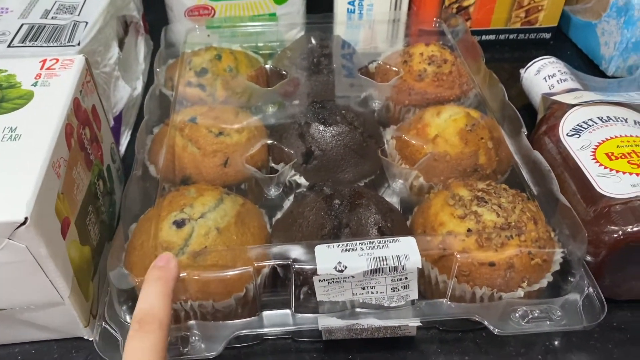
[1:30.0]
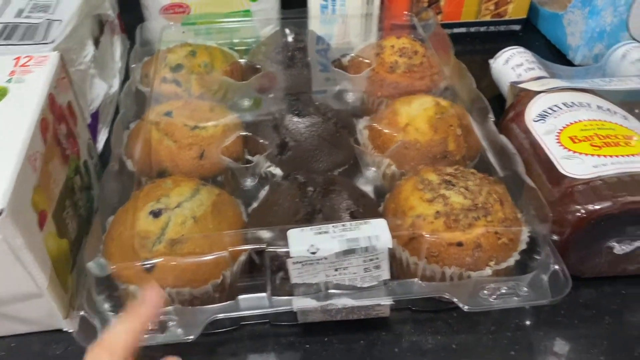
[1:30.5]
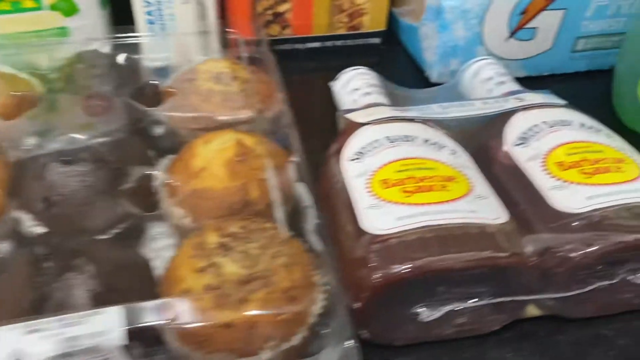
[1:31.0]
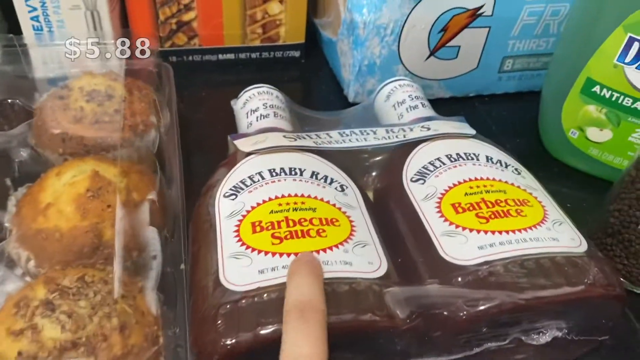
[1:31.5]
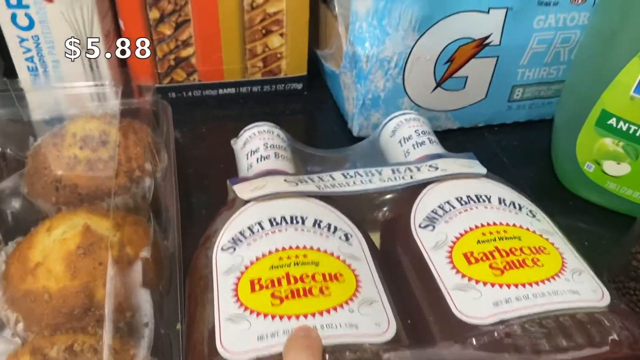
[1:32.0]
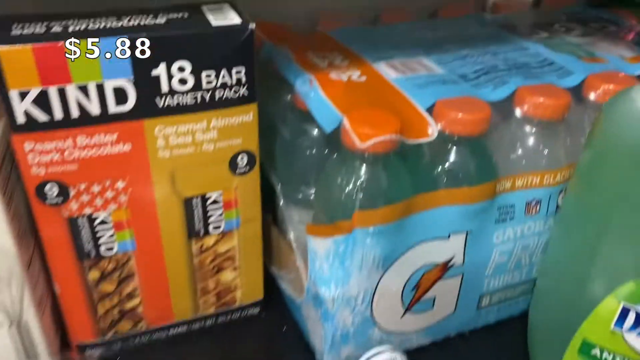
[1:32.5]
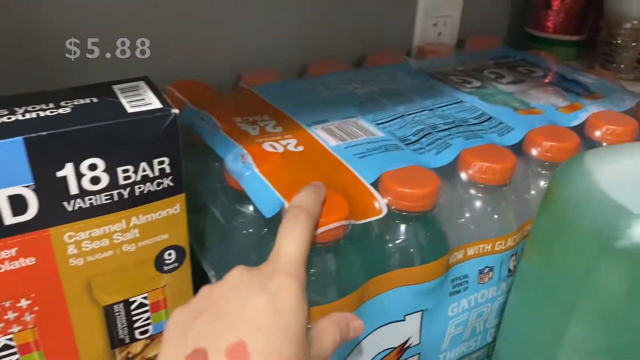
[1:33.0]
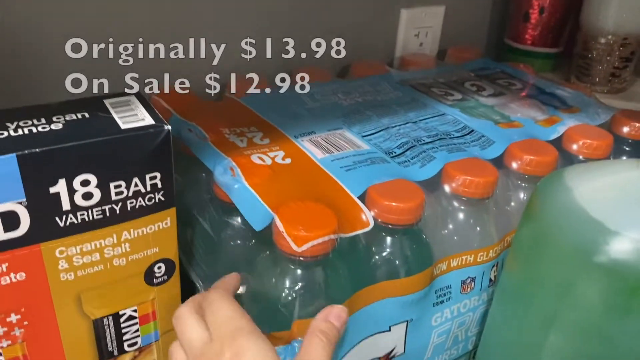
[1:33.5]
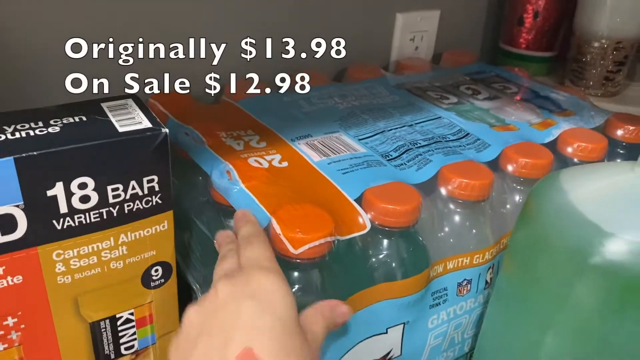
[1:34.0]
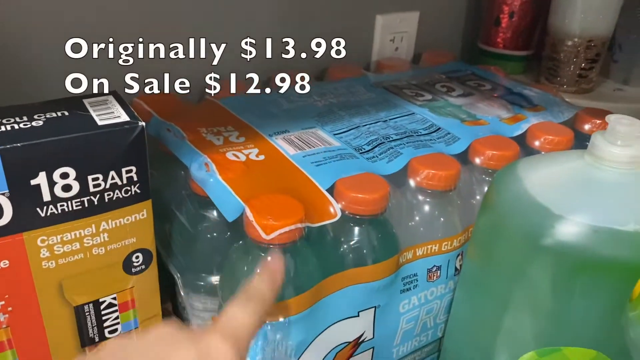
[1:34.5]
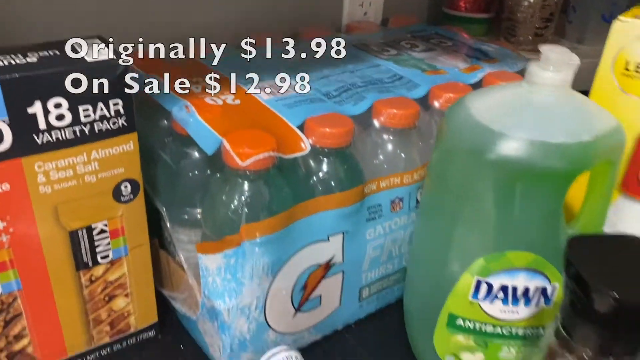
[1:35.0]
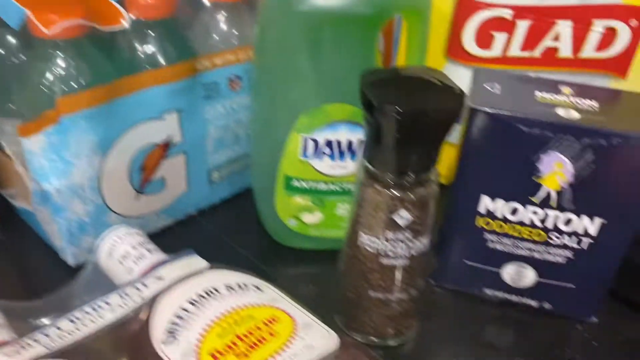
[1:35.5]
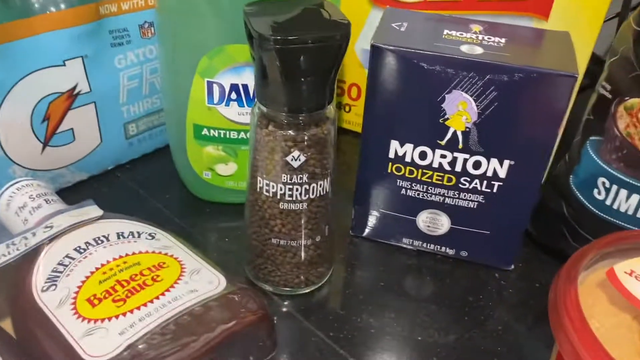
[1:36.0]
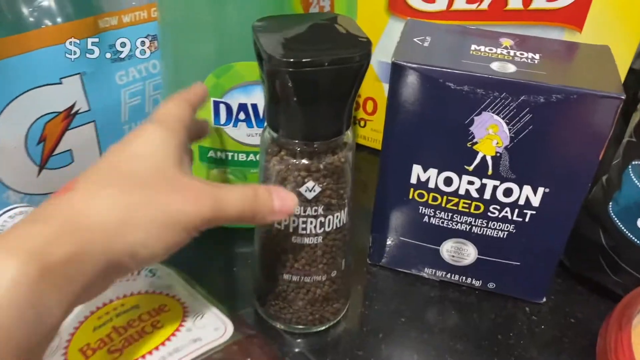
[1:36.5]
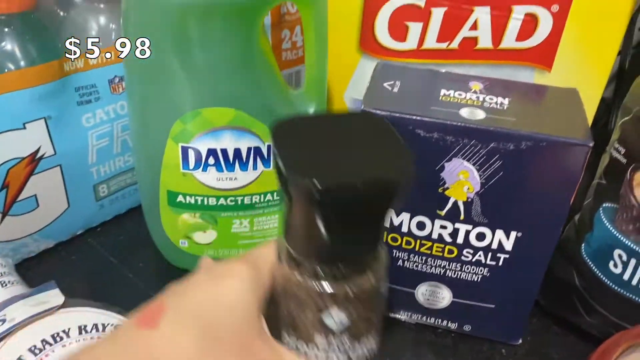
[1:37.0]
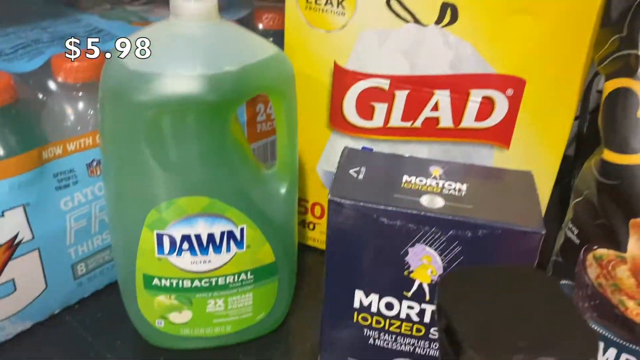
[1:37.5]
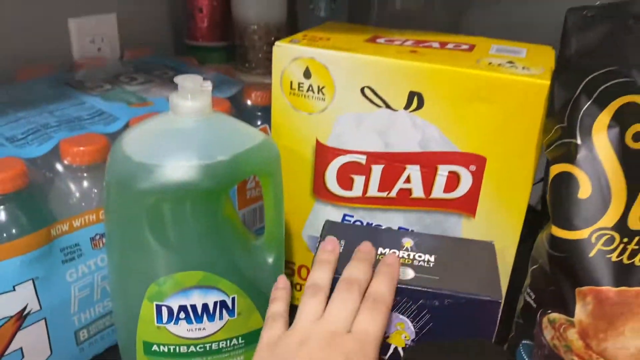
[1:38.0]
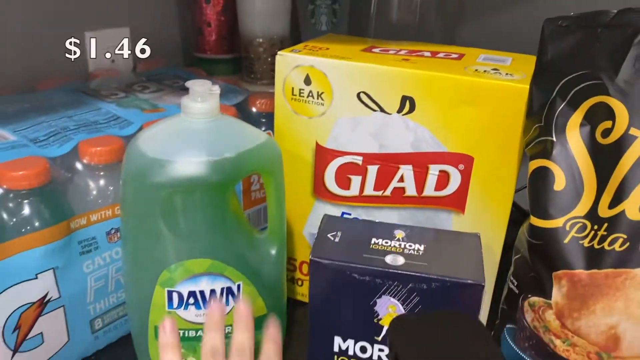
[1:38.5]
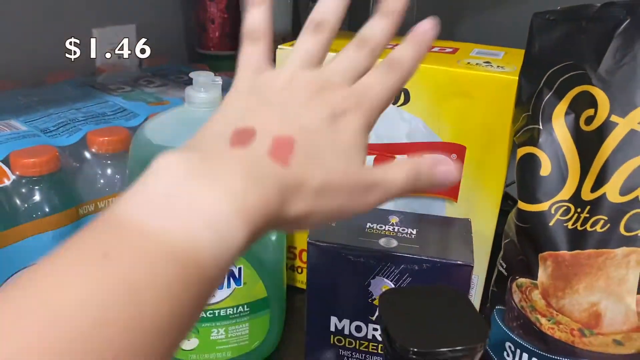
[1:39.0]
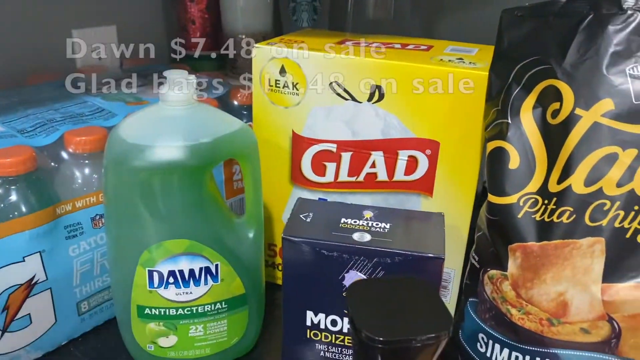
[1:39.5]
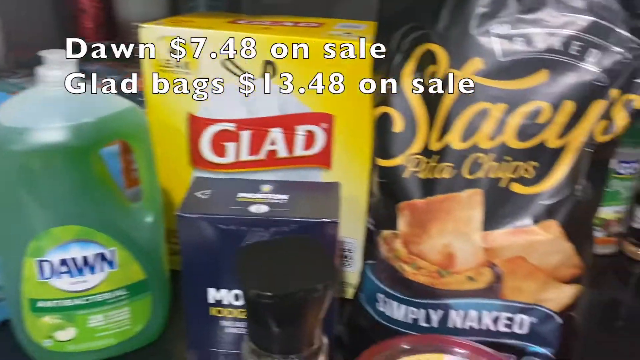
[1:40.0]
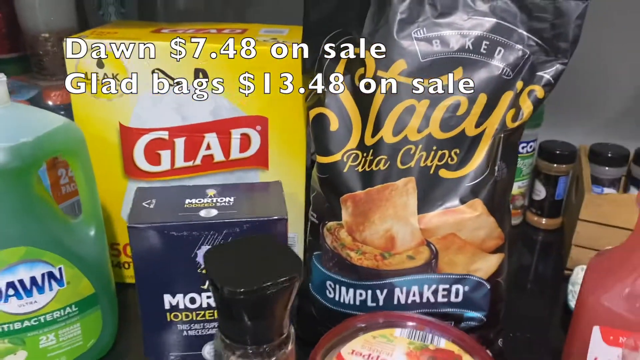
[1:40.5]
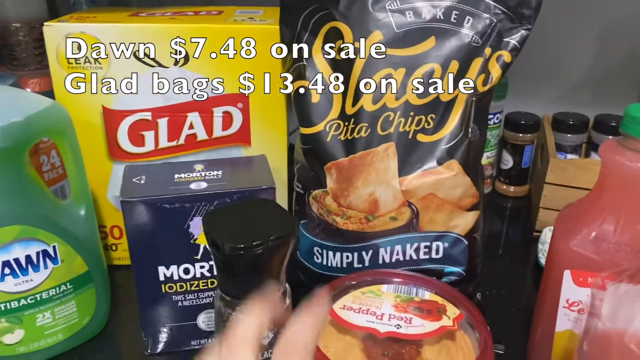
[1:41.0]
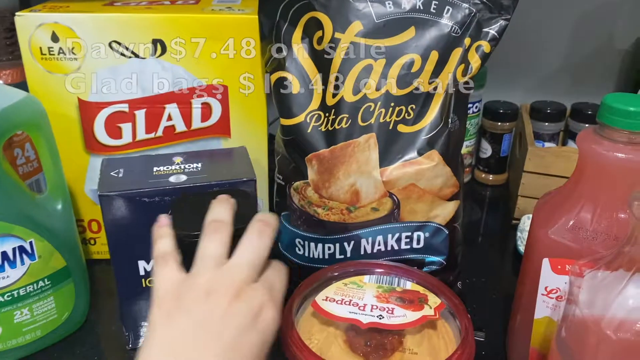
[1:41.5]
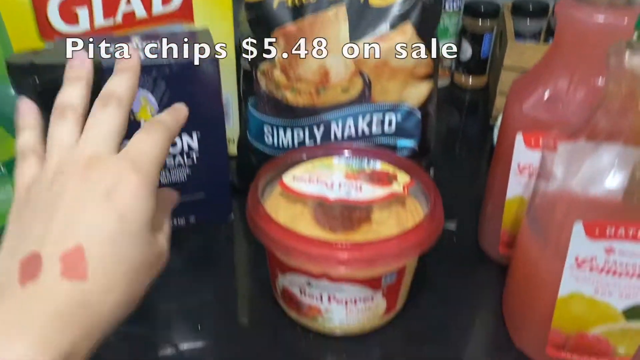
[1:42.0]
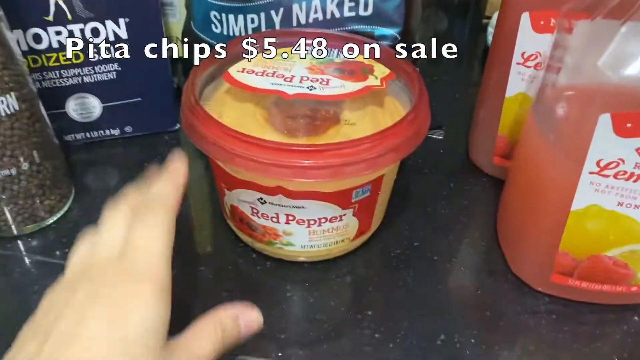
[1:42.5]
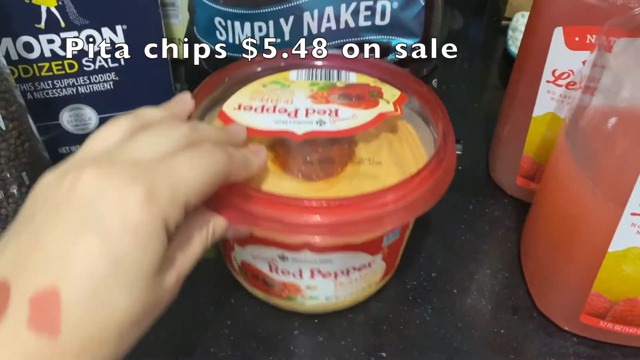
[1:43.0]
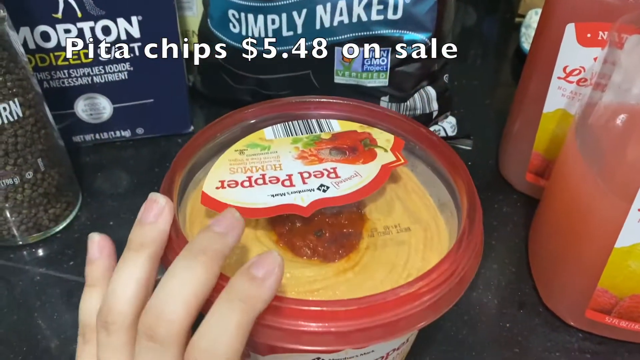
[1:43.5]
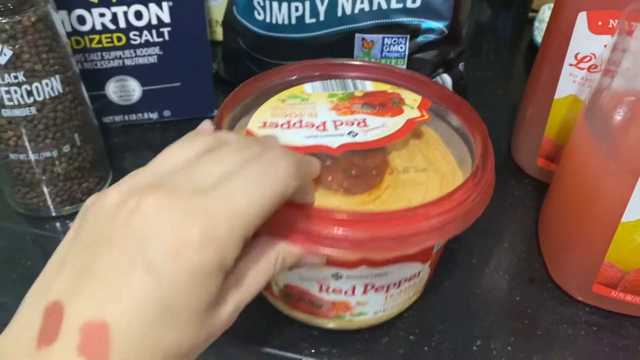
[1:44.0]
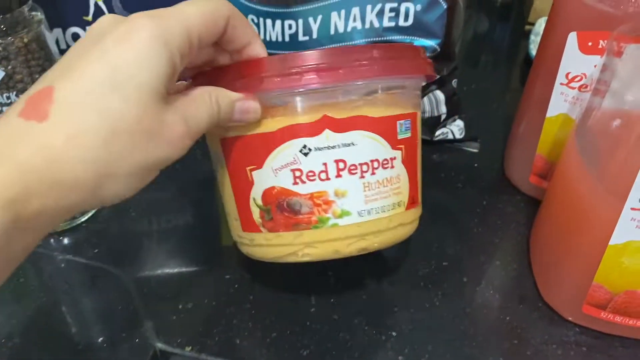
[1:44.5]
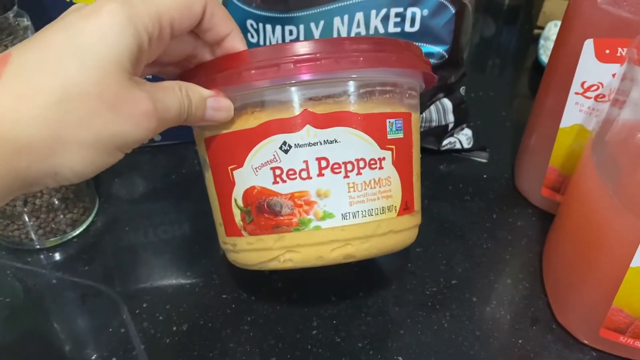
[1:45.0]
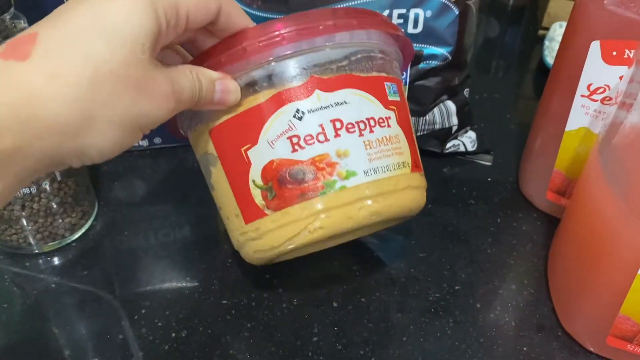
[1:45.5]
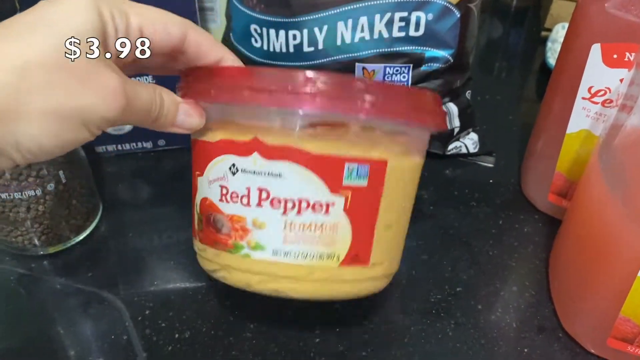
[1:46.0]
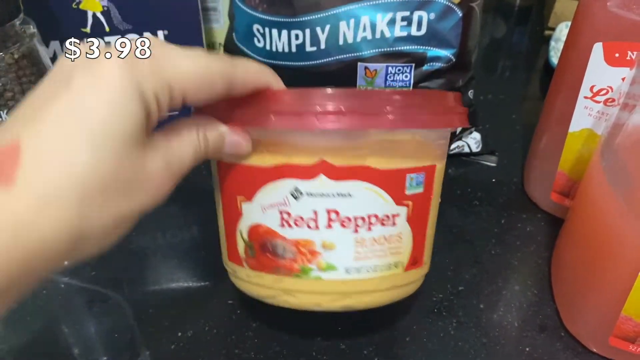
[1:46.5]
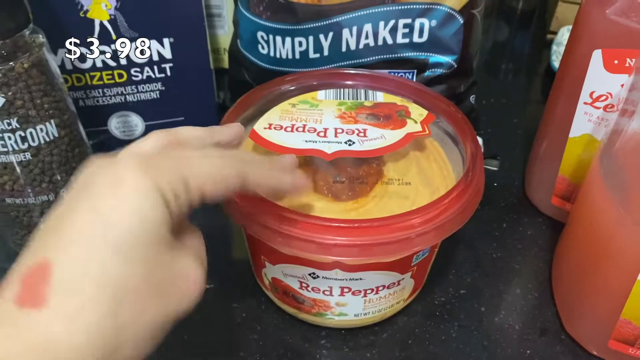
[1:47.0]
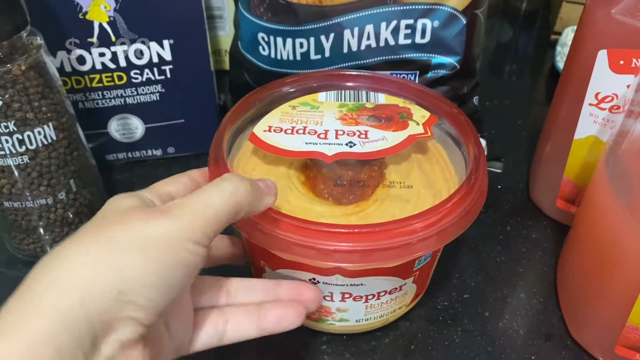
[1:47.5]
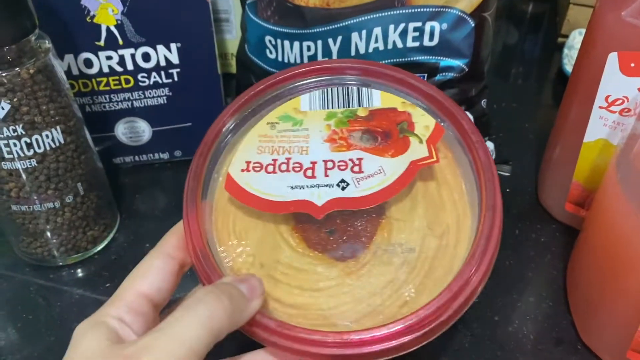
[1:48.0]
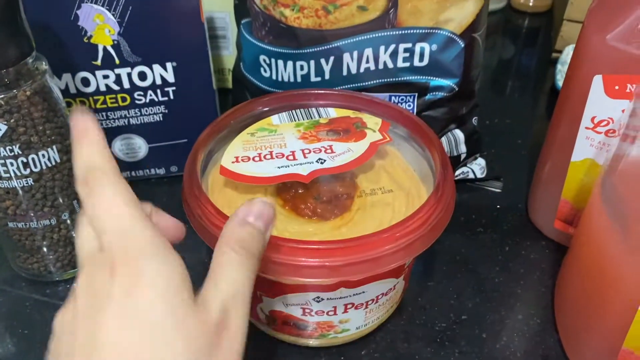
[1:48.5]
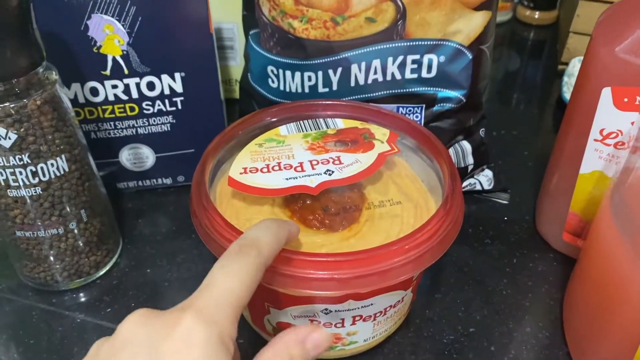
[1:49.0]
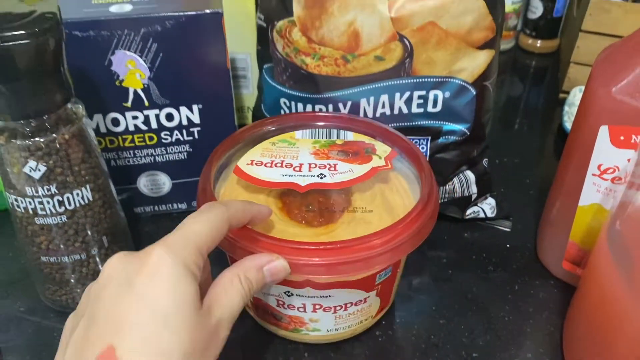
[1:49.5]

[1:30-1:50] Six muffins are shown in a clear plastic container, with some barbecue sauce laying down flat to the right. The index finger of the person's left hand points to one of the muffins in the bottom left corner. The camera quickly pans right to a shrink-wrap style plastic package of two bottles of Sweet Baby Ray's barbecue sauce. The person taps the left bottle with the left index finger, and at the same time a pricing label appears in the upper left corner that says "$5.88." The camera pans up to some Gatorade, and the person points to it with the left index finger and taps the package, then places the hand with the fingertips on the left side of the package.